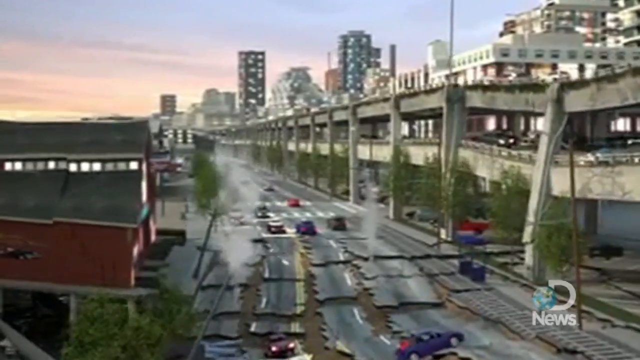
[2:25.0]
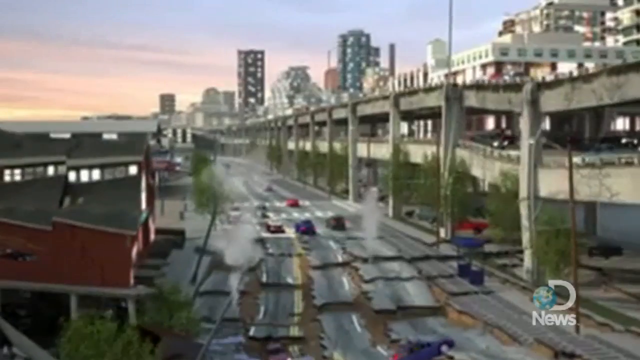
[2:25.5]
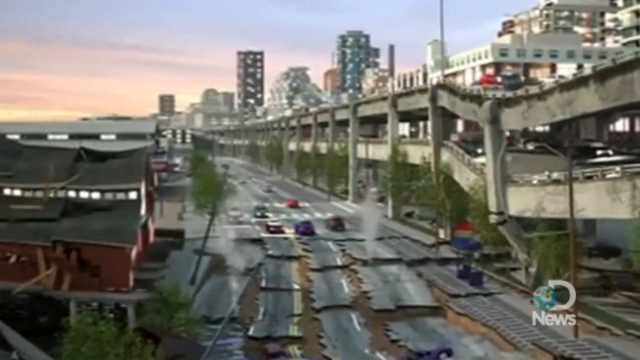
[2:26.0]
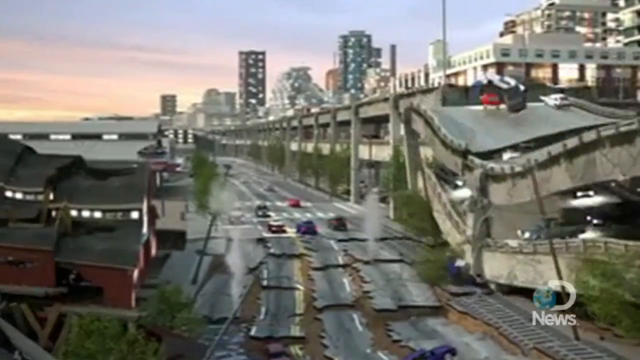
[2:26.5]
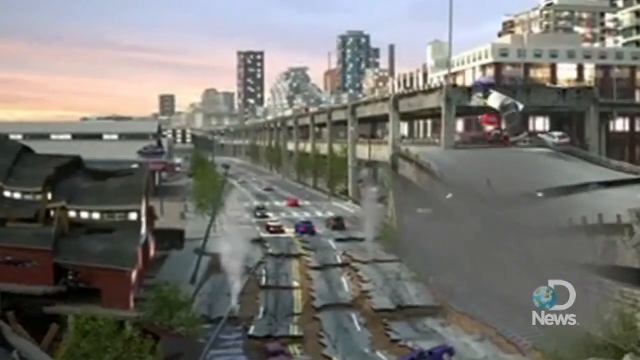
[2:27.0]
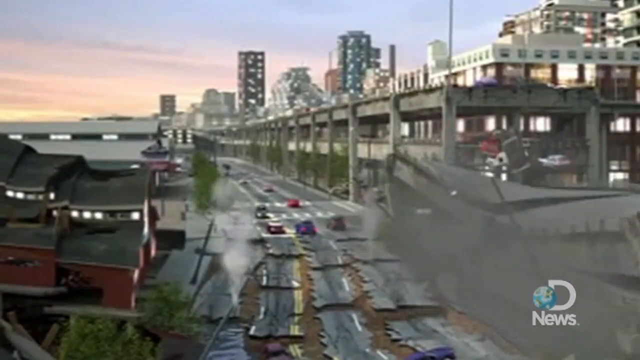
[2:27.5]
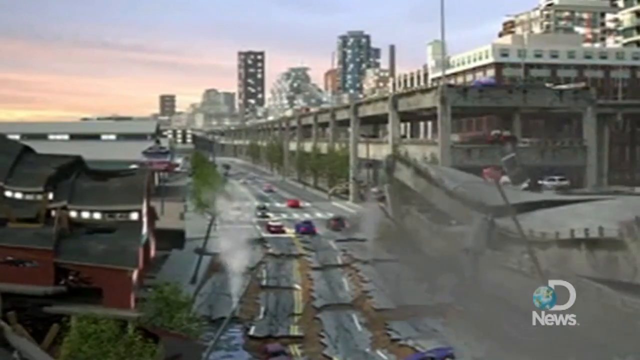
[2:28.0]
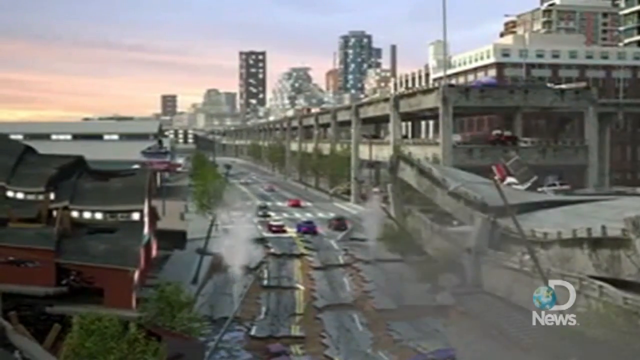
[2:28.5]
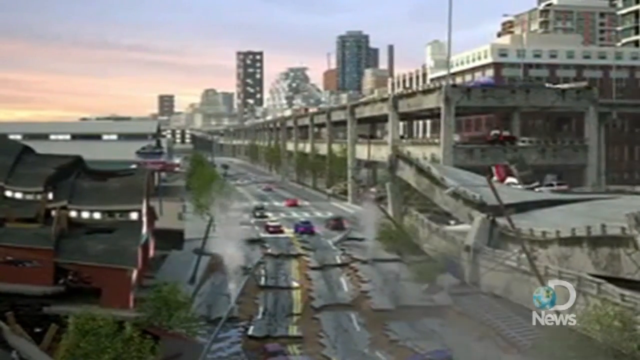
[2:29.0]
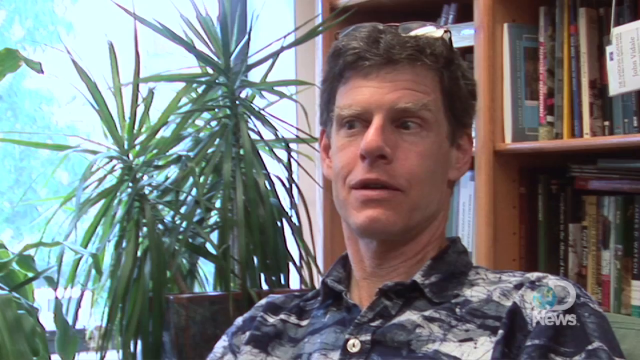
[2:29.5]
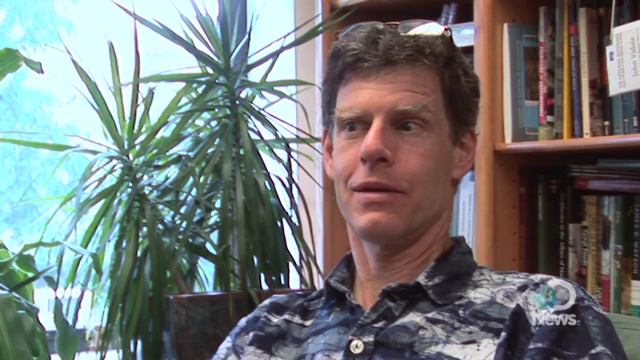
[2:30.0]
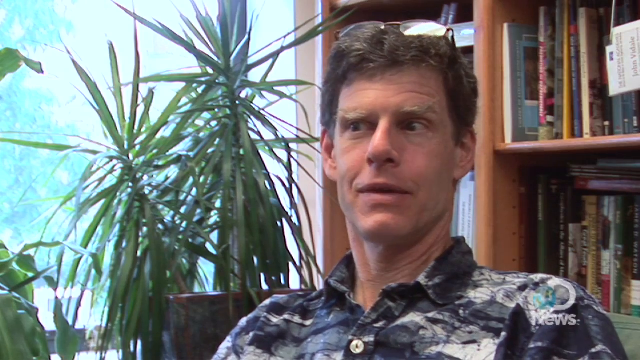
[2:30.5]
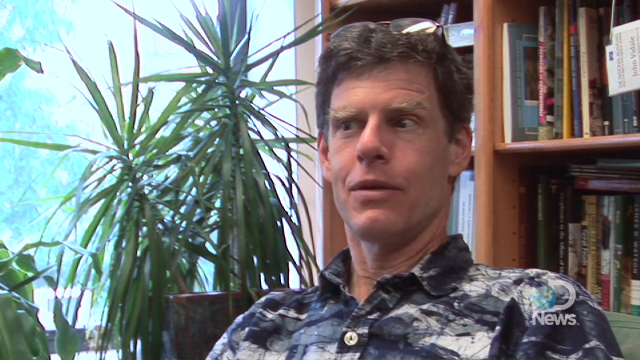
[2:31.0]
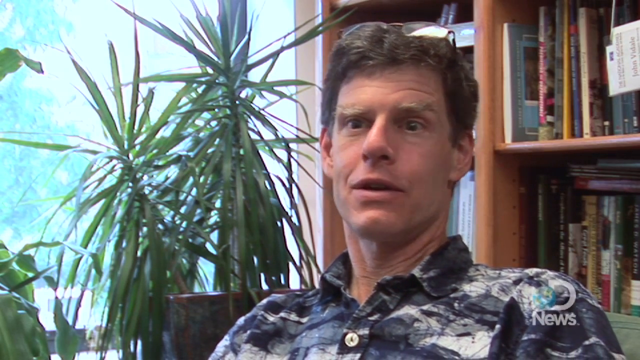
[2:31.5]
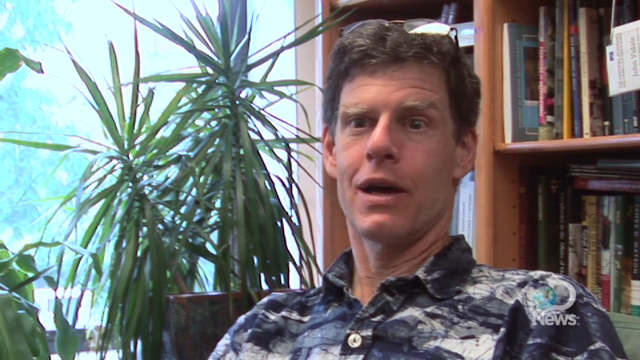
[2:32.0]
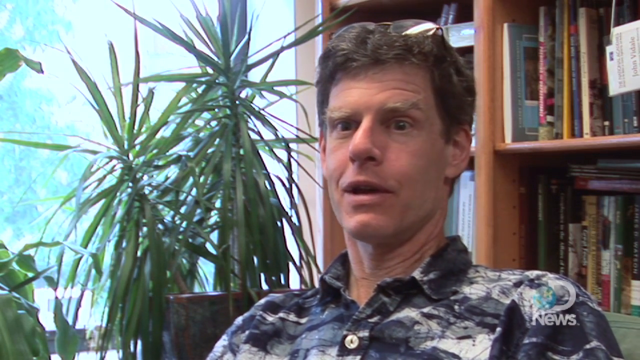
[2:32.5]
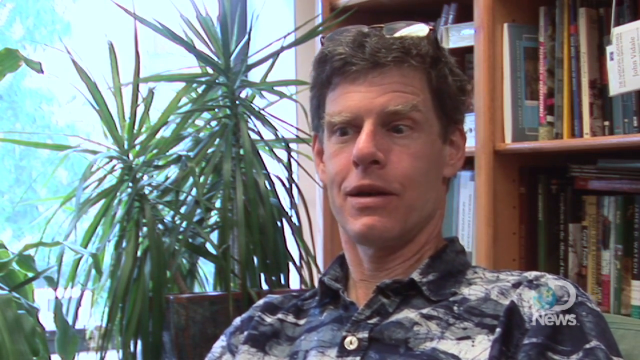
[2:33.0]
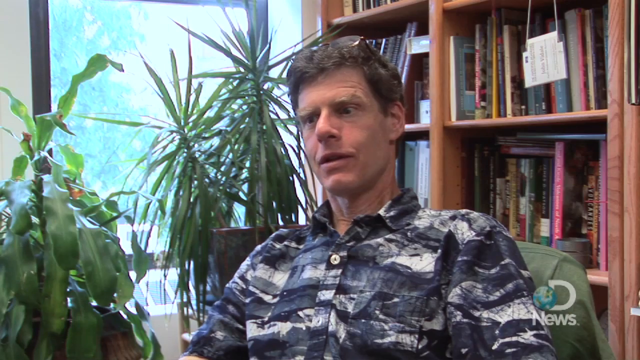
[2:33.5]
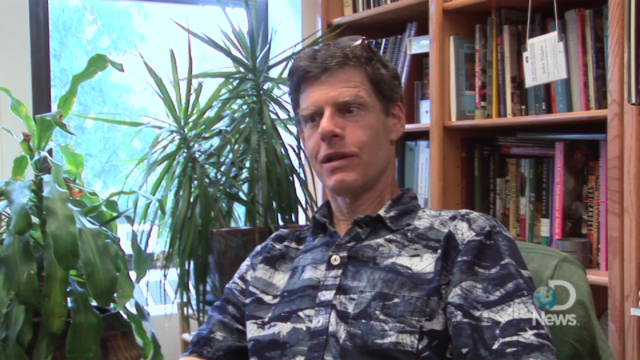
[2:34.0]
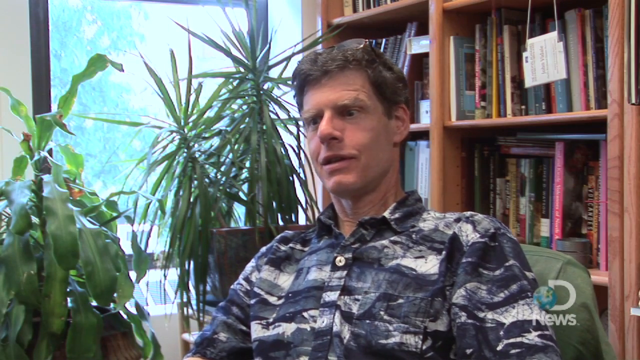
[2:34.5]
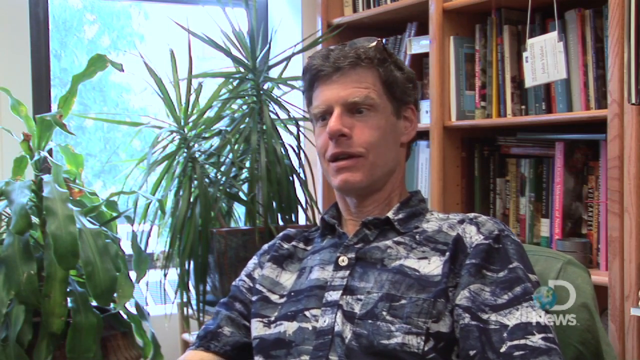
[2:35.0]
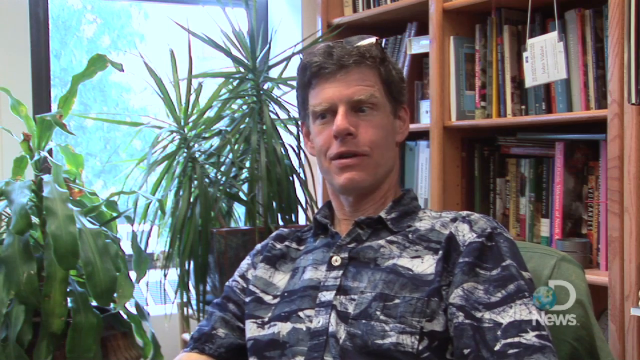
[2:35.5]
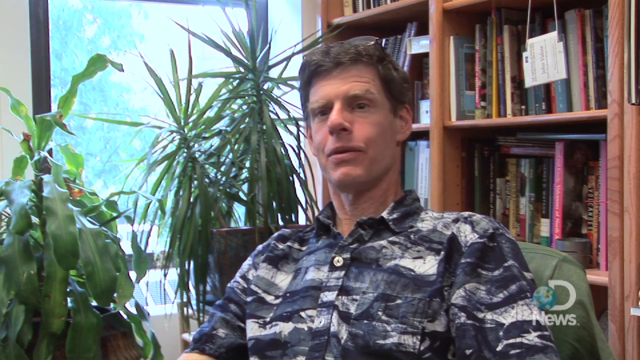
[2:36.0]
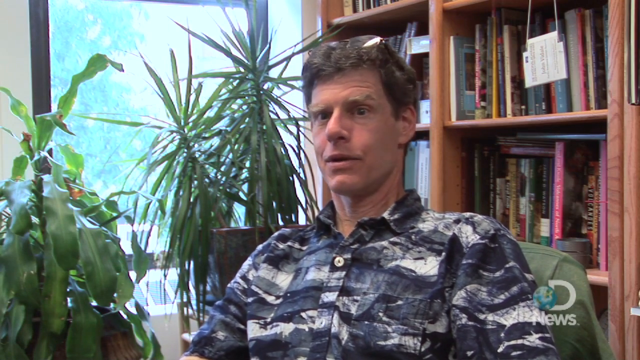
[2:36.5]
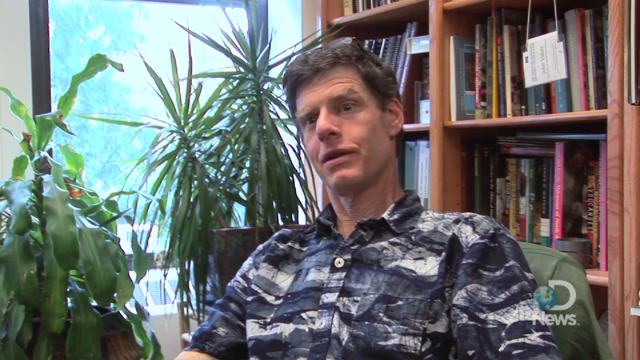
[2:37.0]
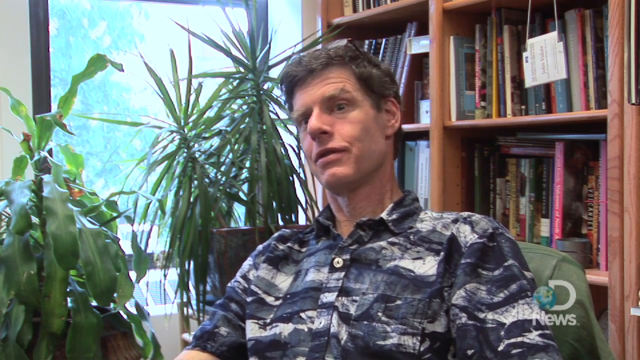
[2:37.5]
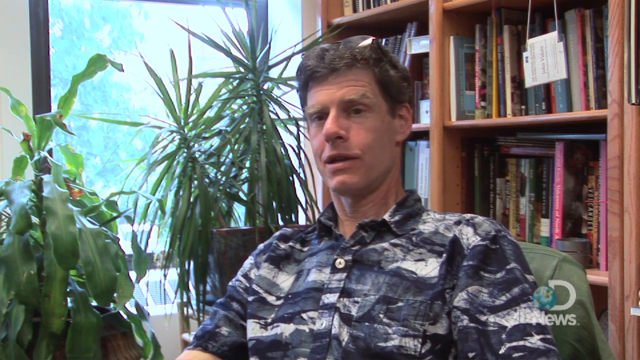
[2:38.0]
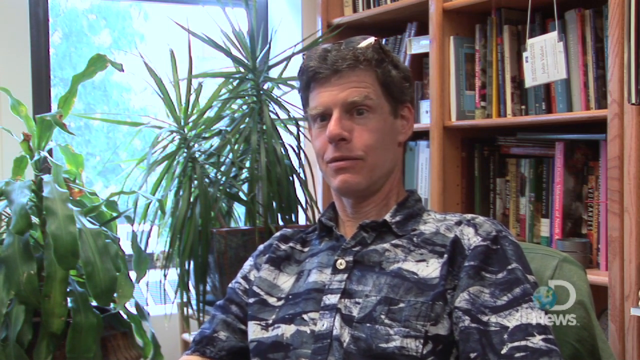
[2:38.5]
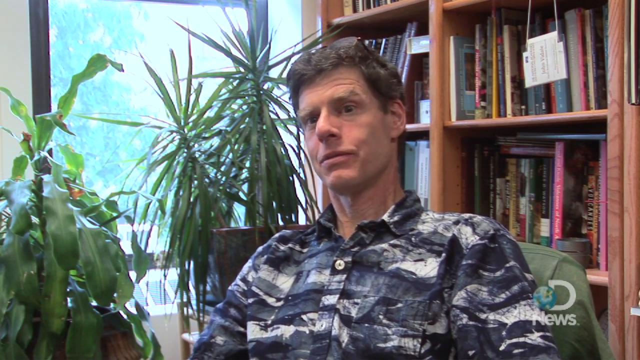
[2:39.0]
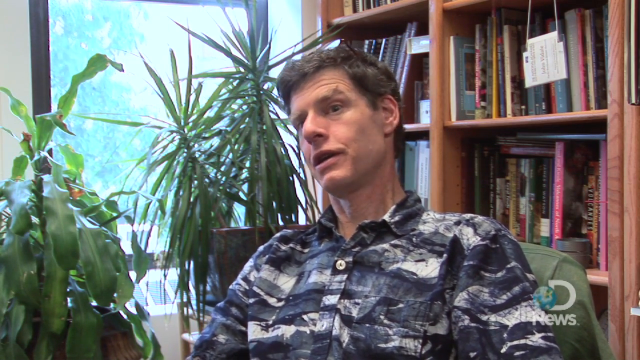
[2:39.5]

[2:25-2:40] A complete section of the double-decker highway falls to the ground, the top layer coming down on top of the layer beneath it with all the cars on it, amid smoke and fires. Professor Vendow continues speaking. He sits in a chair with a couple of plants beside him; one looks like a palm-type plant, and the other is unidentified. He sits in front of a bookshelf with quite a few books, and all the shelves look full, though the books are not visible well enough to count.